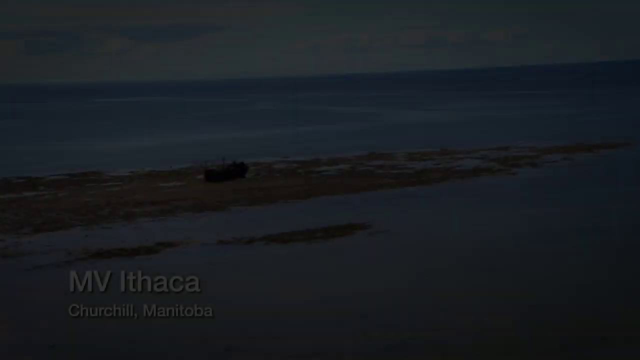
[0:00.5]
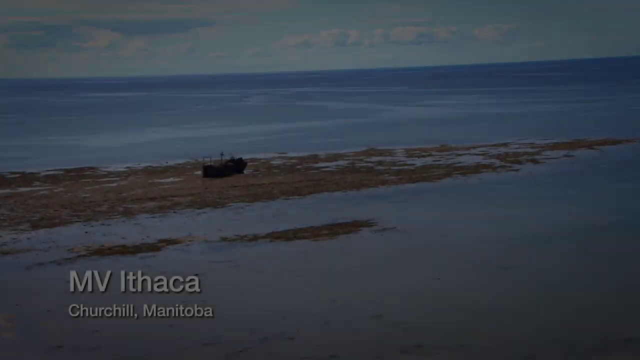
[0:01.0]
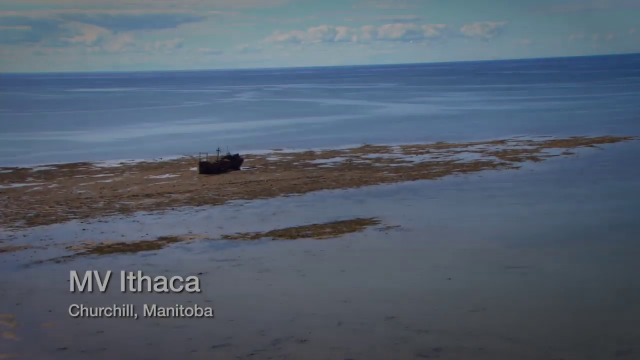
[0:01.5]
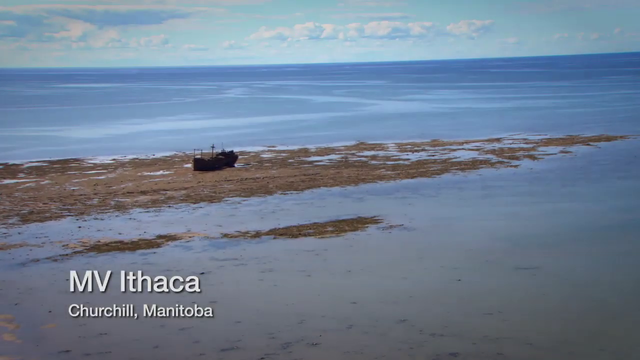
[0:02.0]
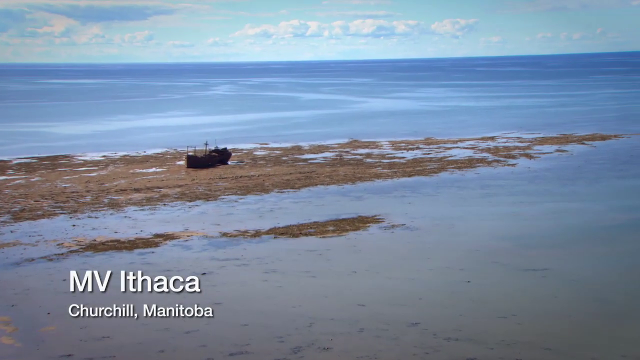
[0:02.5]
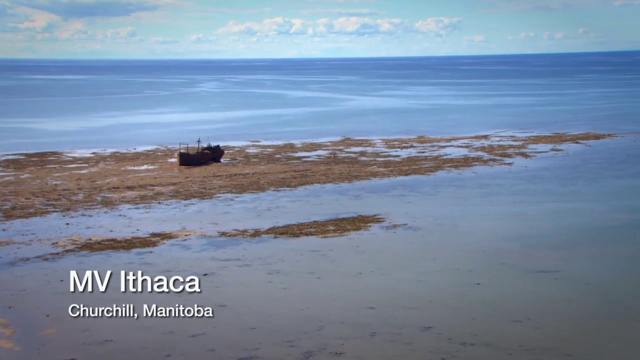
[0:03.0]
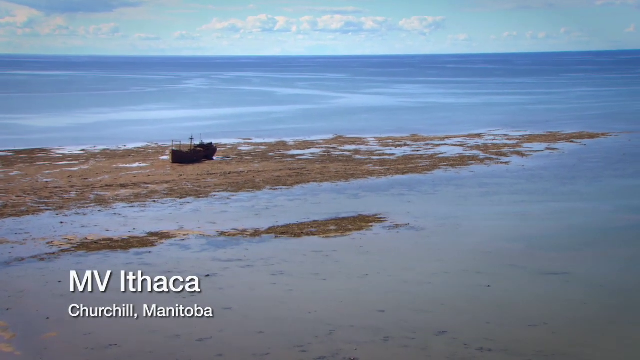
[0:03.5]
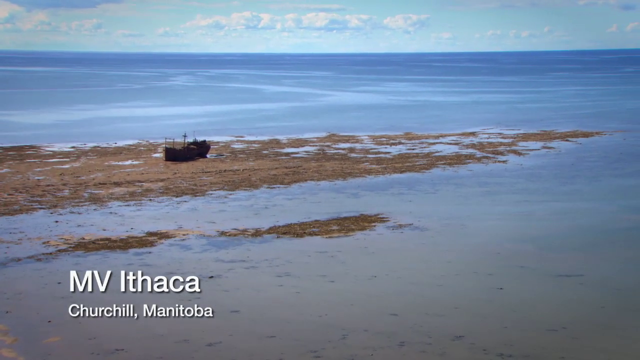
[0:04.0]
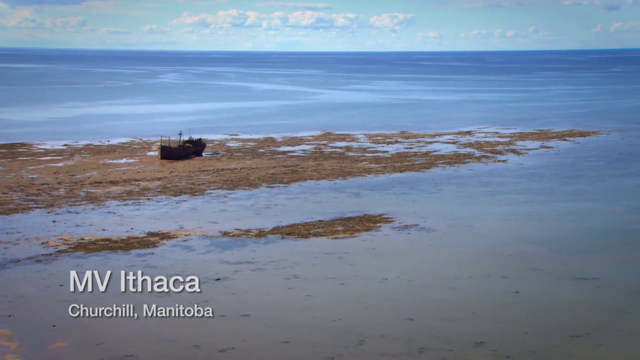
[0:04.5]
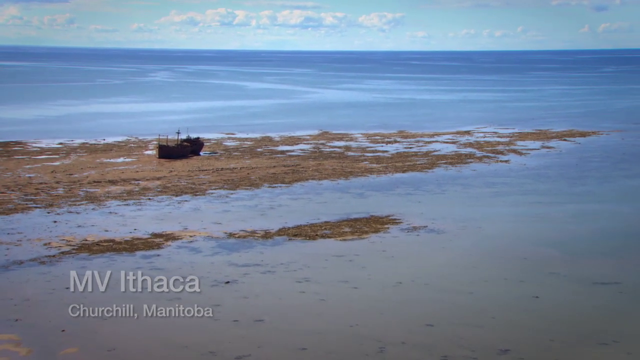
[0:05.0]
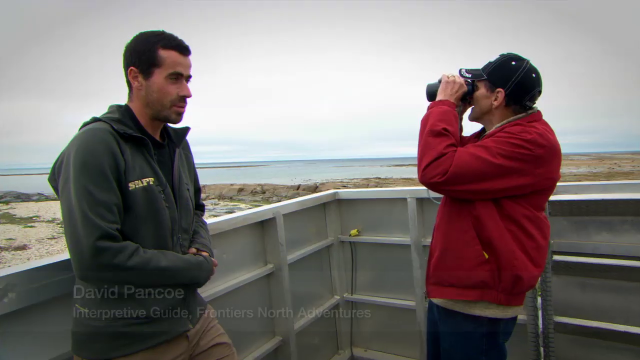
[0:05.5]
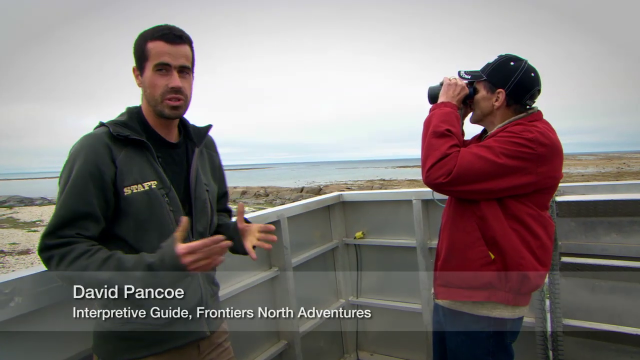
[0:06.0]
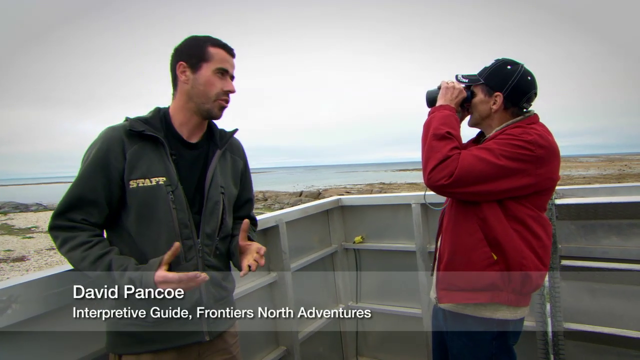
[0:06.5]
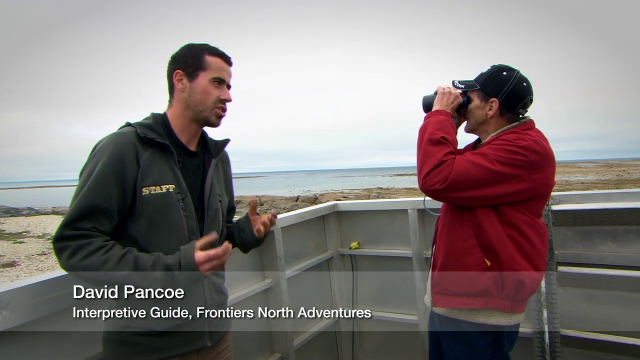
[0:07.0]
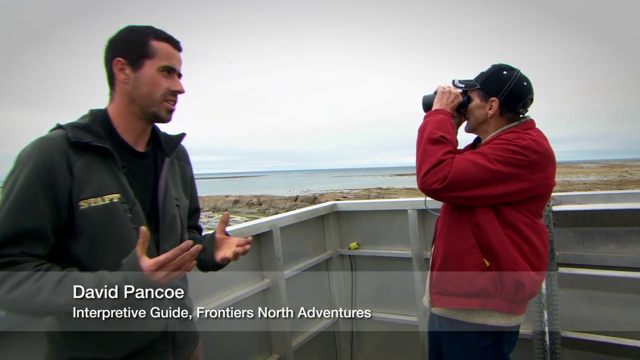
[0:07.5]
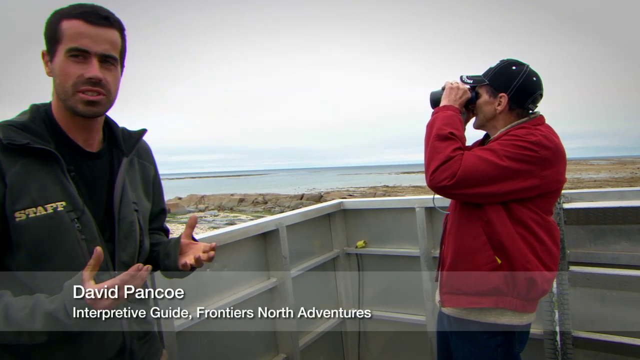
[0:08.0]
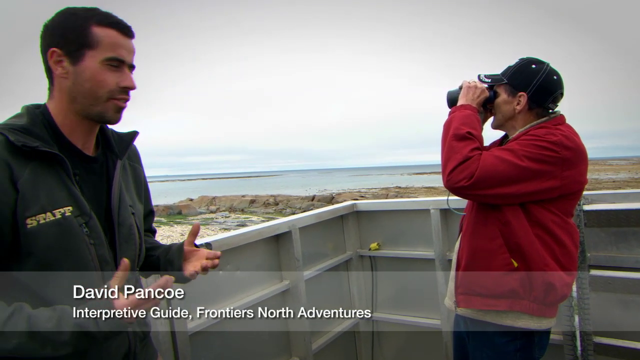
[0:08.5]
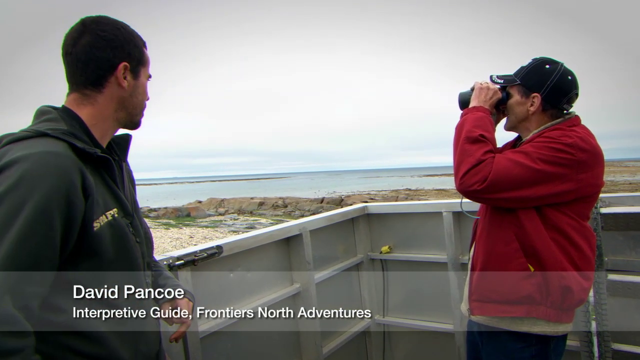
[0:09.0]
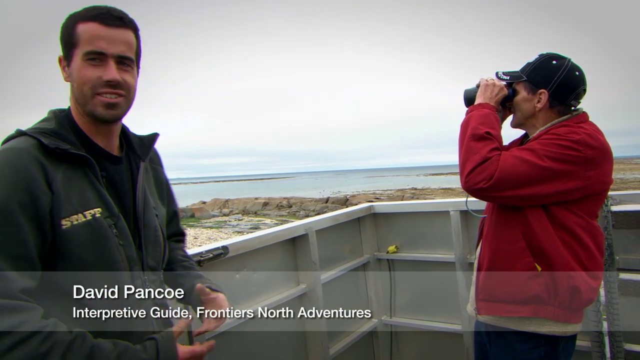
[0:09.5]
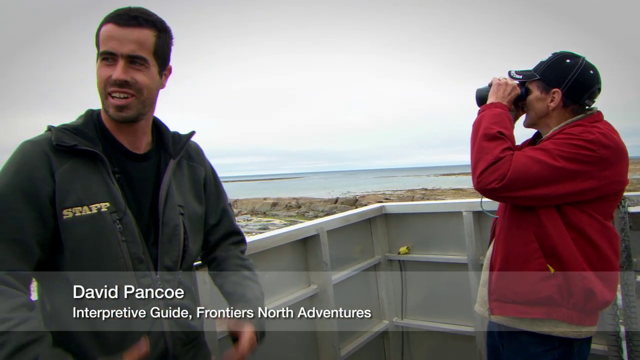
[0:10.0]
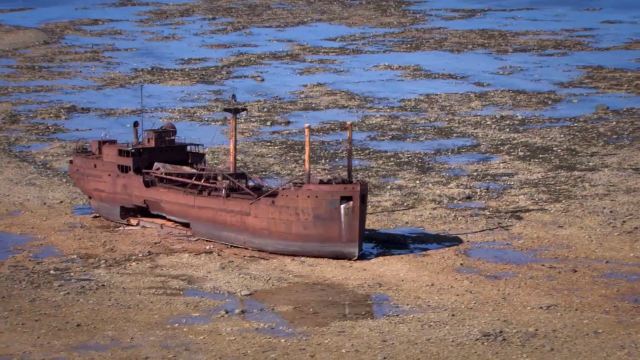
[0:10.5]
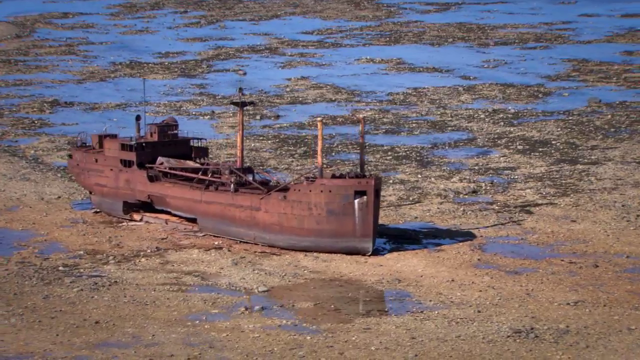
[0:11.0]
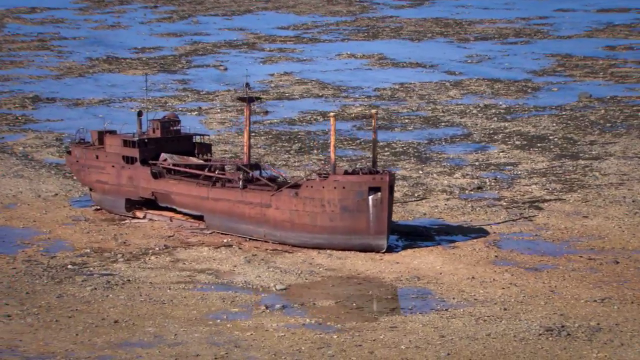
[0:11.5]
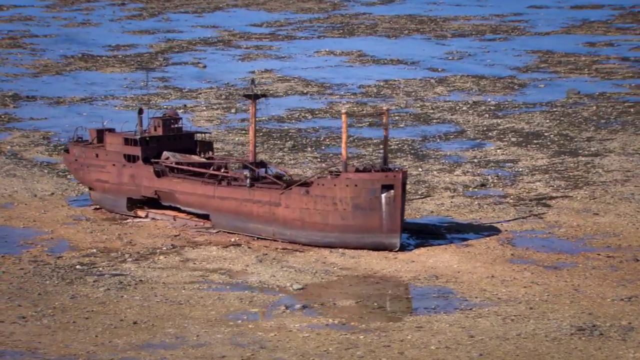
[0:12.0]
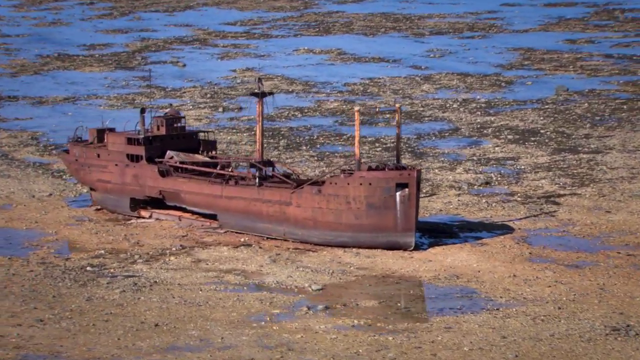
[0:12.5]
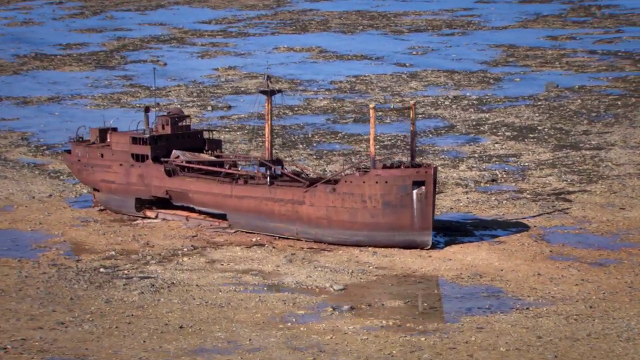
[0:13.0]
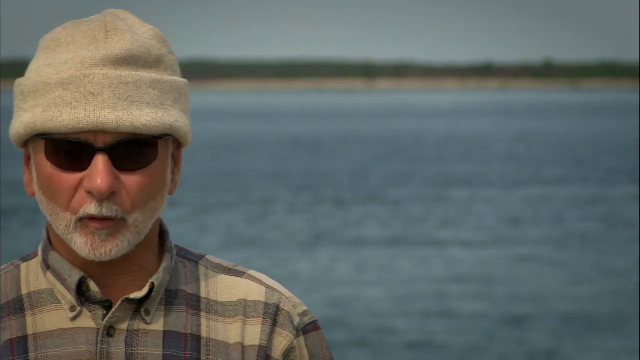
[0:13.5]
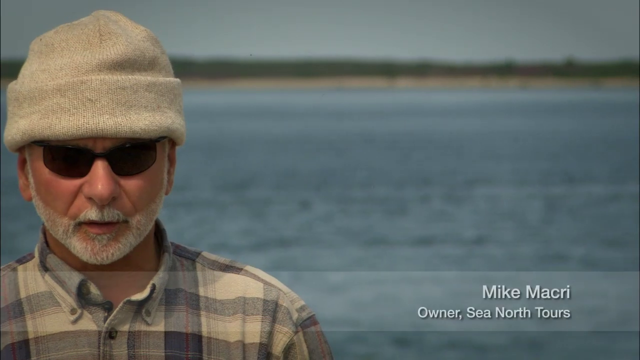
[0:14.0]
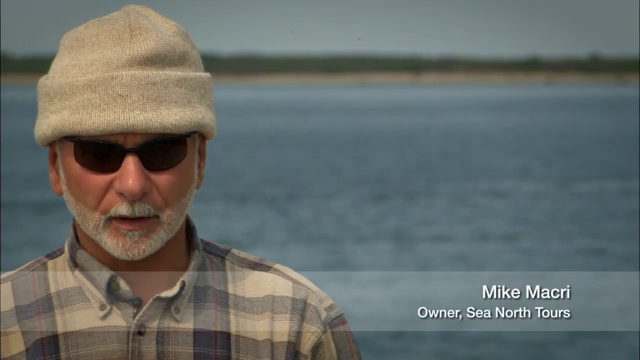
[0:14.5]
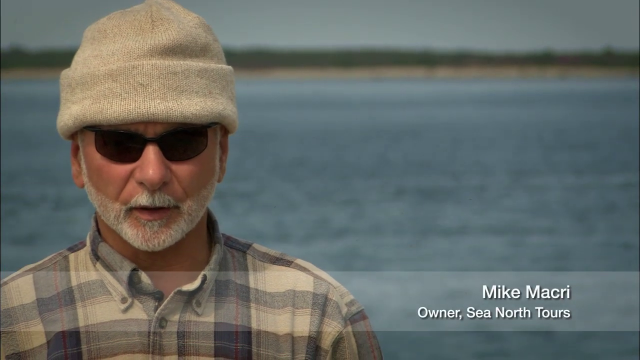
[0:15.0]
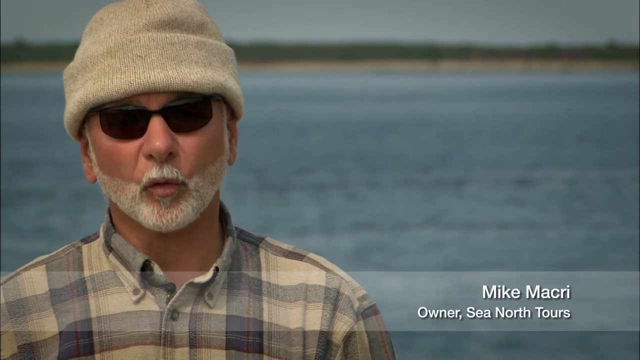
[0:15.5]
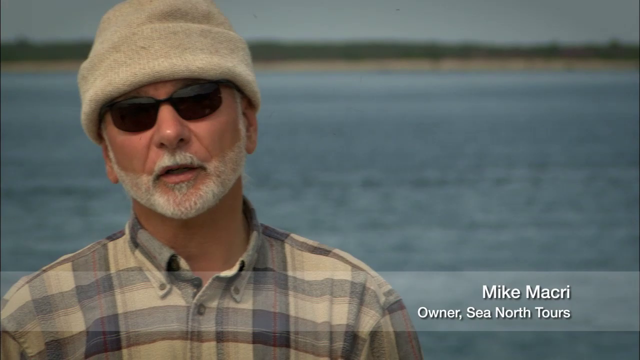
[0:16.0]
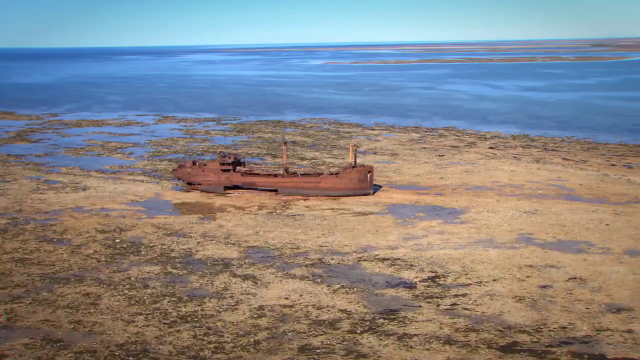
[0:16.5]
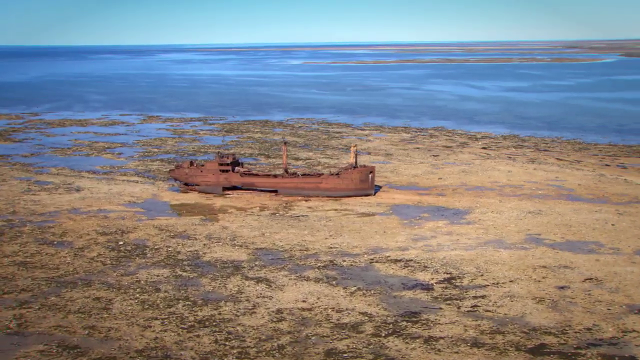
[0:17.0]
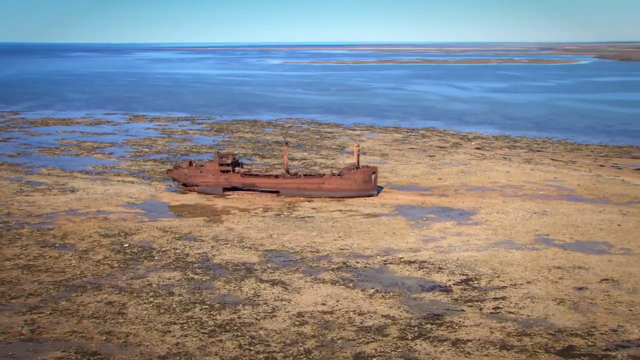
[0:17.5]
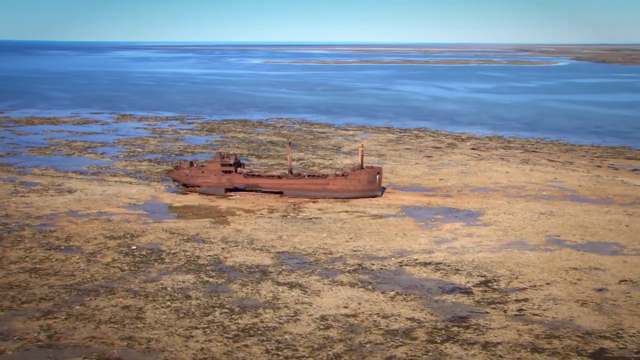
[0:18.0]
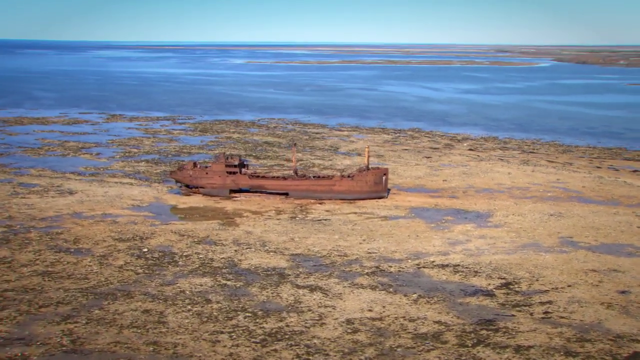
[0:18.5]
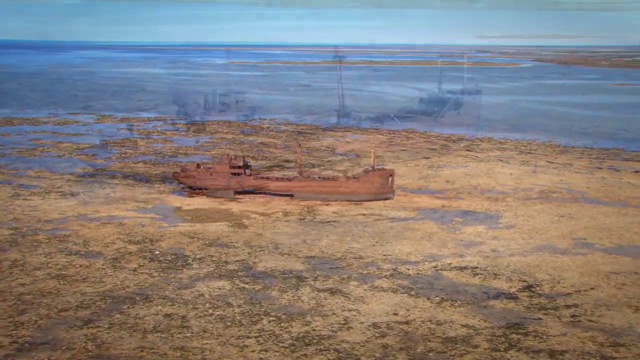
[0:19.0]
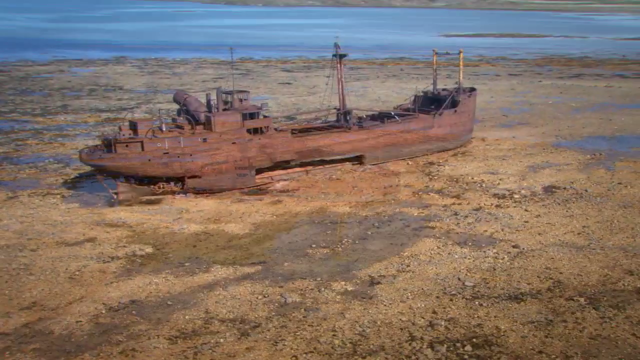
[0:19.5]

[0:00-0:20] The camera fades in from black to a calm body of water that could be a very large lake or the ocean. A sandbar in the water holds what appears to be an abandoned boat. Text on the lower left of the screen reads "MV Ithaca" with "Churchill, Manitoba" underneath. The camera pans to the left, and the scene suddenly switches to a man of about 35 with very dark brown, almost black, hair, talking with his hands inside a structure that resembles a lifeguard tower, only much bigger, with white wood walls. He wears a long-sleeve army green jacket and a black t-shirt. He talks toward the camera while looking away, his body turned to the viewer's right, his left. On-screen text reads "David Pancoe, Interpretive Guide, Frontiers North Adventures." An older man, probably around 70, is a couple of feet to his right and slightly back, wearing a red outdoor jacket, a white shirt, what looks like dark blue or black pants, and a black baseball cap; he holds binoculars up to his eyes and looks out at the beach or the ocean. The scene changes to a close-up of the boat, which is a large, rusted-out, rust-colored boat with a piece missing on the lower side toward the hull. Next, a man in dark sunglasses with a well-trimmed white beard and mustache appears, wearing a tan beanie sweater cap and a gray and tan plaid shirt buttoned all the way up. Text on the lower right of the screen reads "Mike Macre, Owner, Sea North Tours." Behind him are the ocean, sand and some grain. An aerial view then shows the rusted-out ship or large boat on the sandbar, followed by another close-up of it.